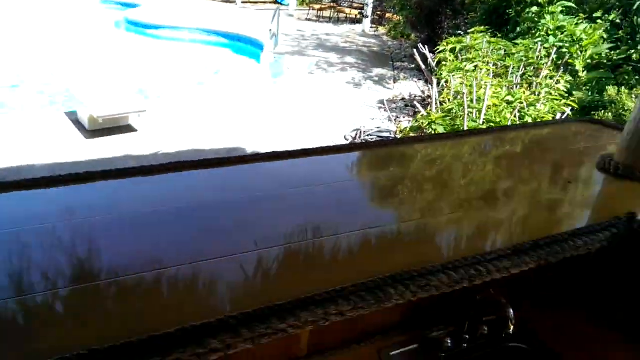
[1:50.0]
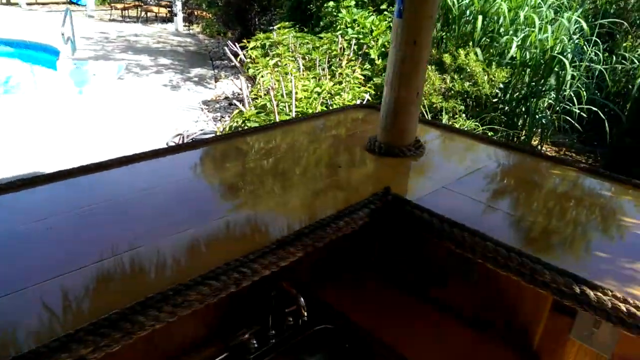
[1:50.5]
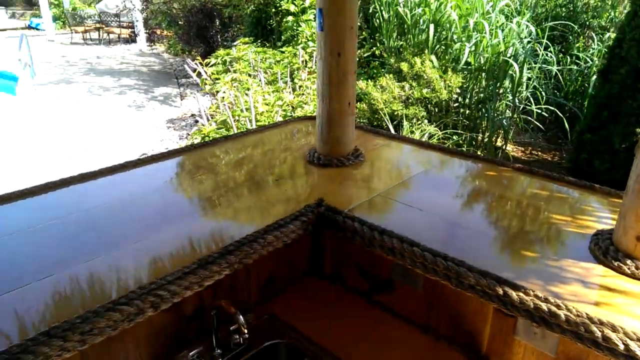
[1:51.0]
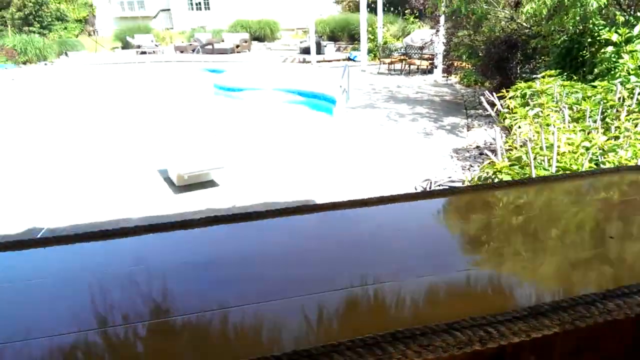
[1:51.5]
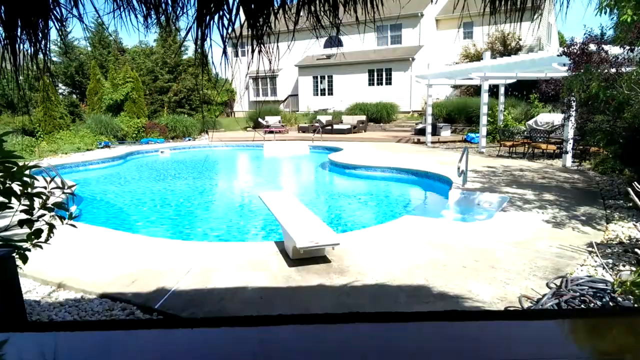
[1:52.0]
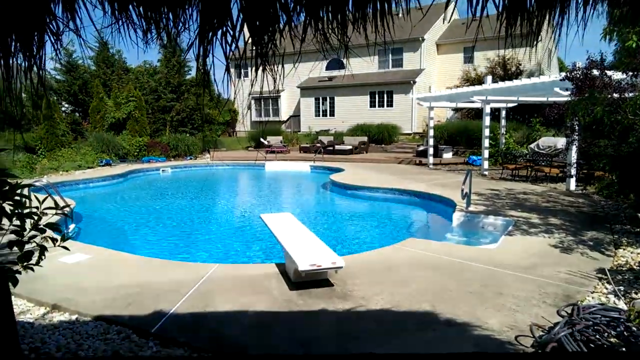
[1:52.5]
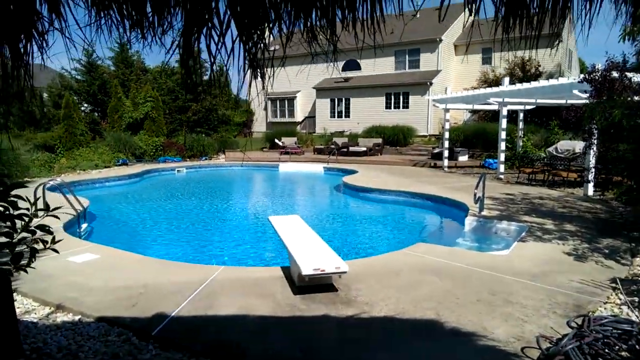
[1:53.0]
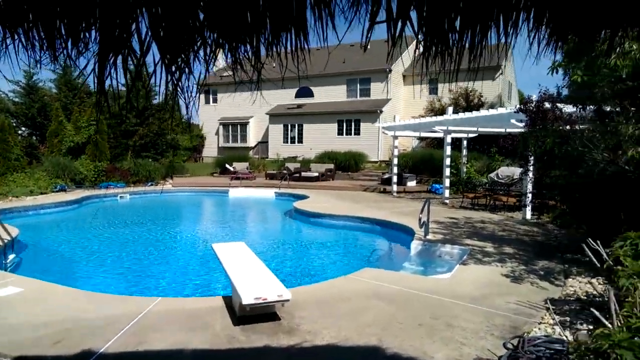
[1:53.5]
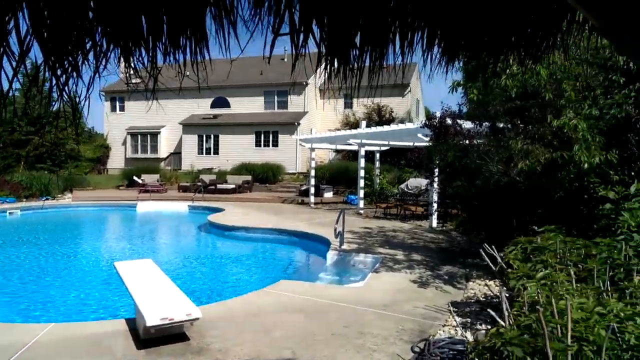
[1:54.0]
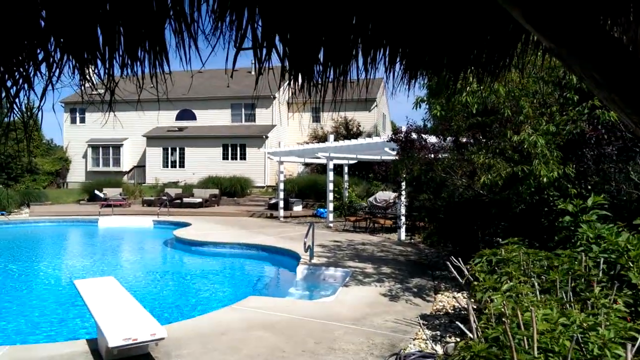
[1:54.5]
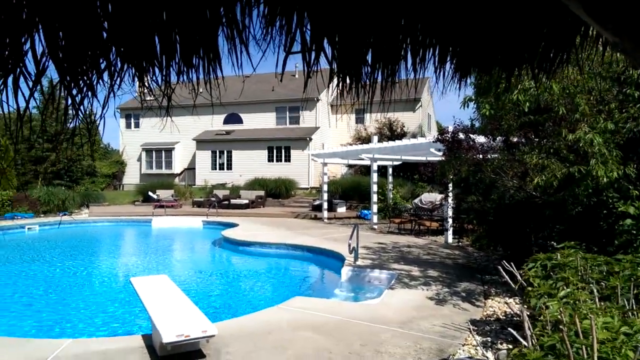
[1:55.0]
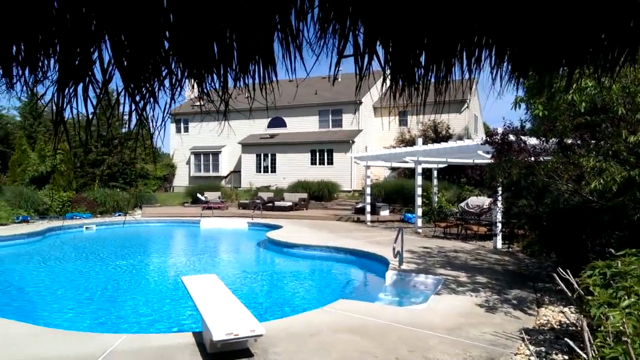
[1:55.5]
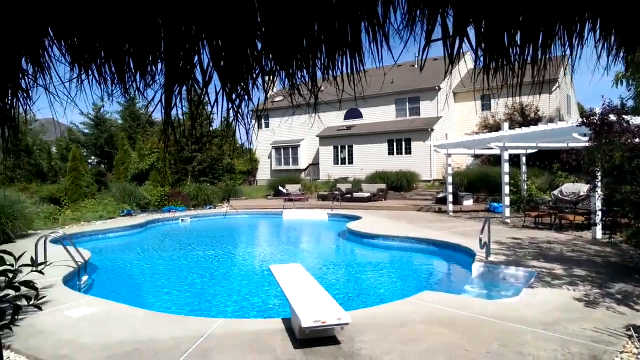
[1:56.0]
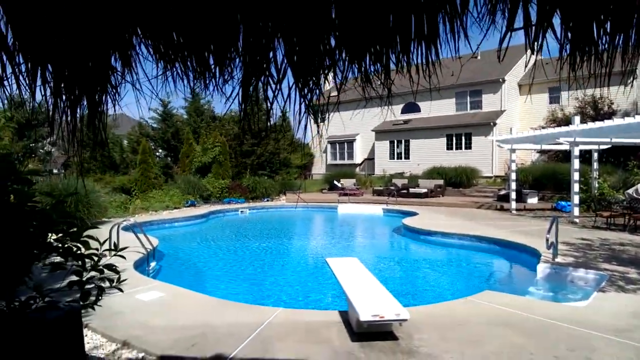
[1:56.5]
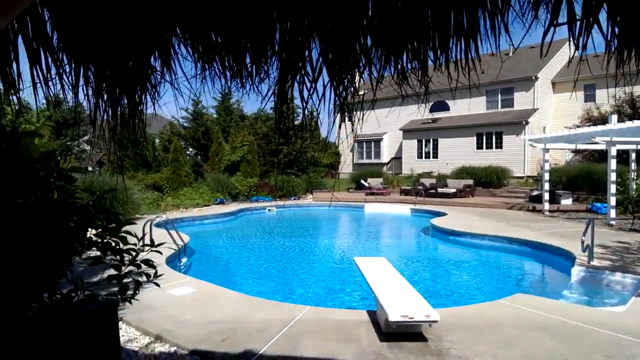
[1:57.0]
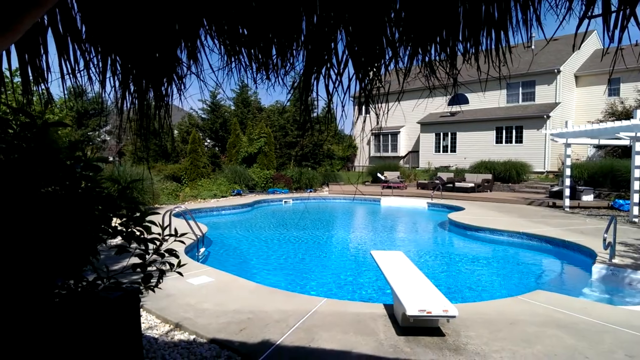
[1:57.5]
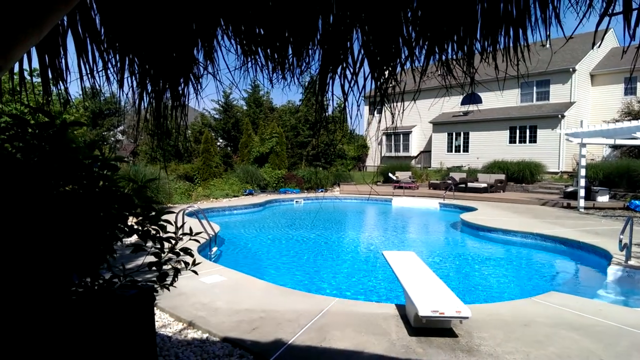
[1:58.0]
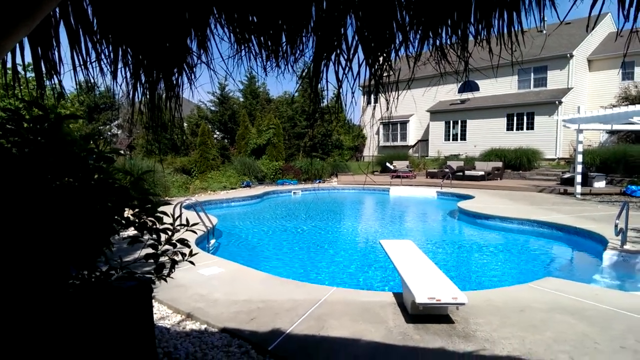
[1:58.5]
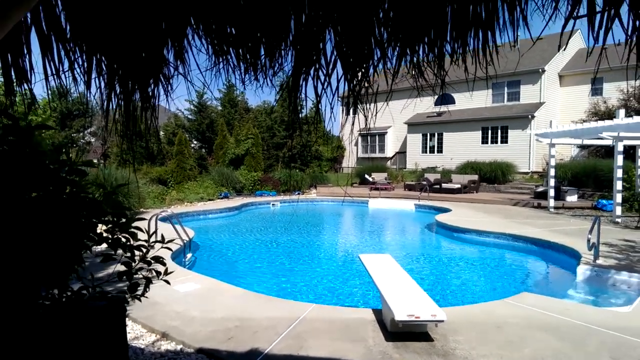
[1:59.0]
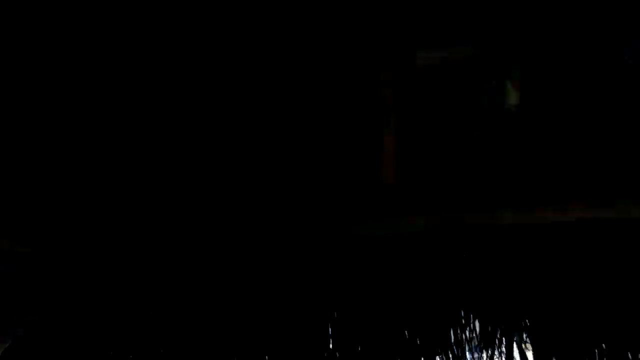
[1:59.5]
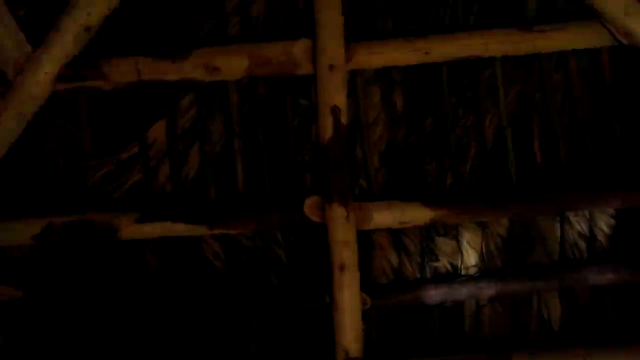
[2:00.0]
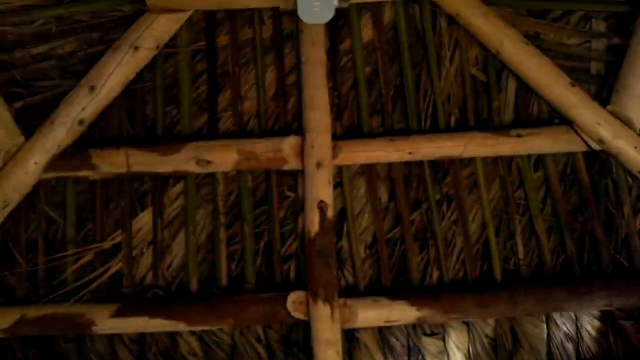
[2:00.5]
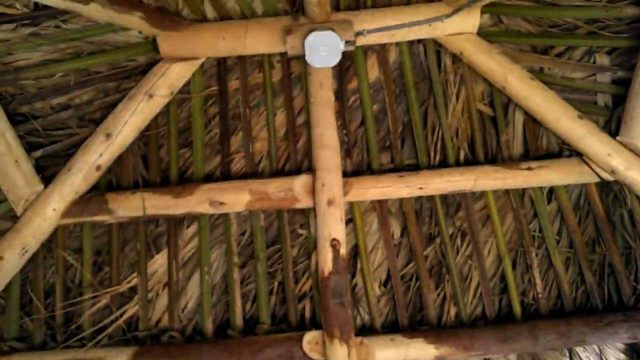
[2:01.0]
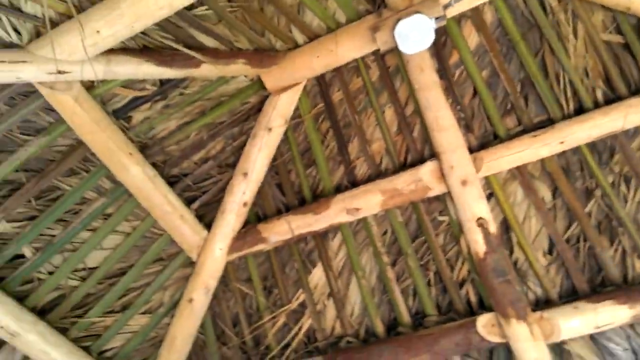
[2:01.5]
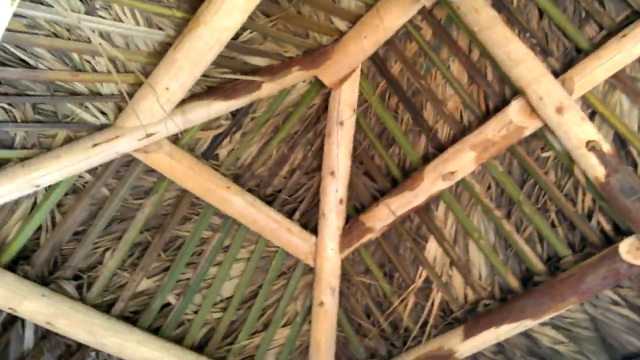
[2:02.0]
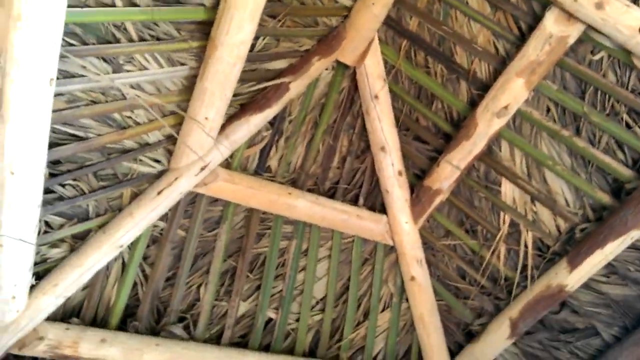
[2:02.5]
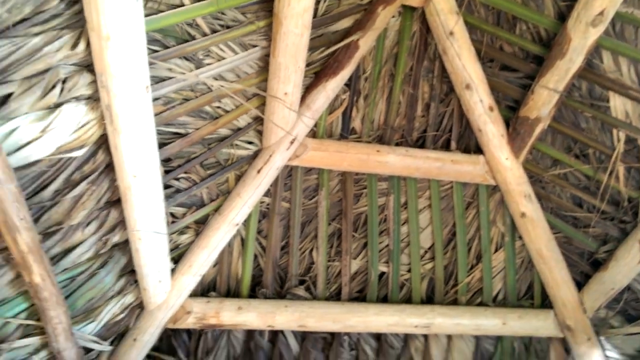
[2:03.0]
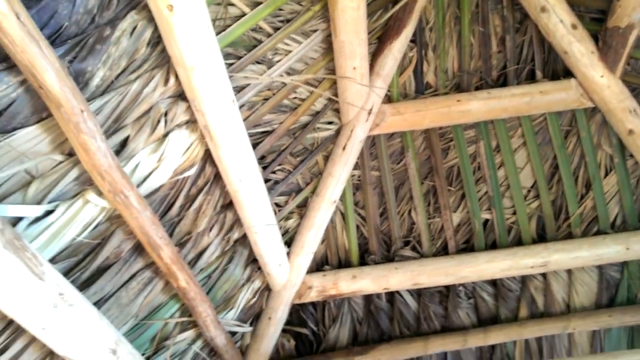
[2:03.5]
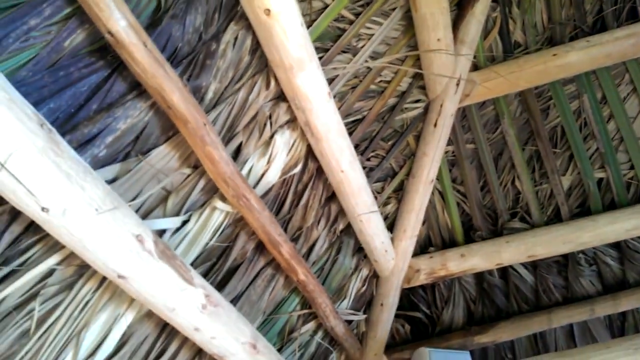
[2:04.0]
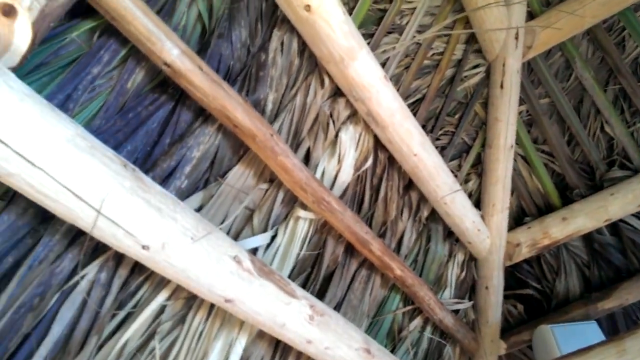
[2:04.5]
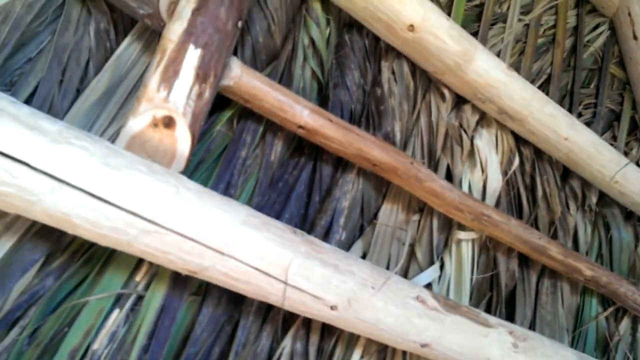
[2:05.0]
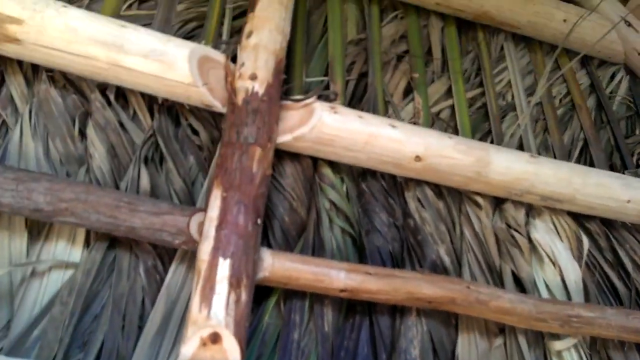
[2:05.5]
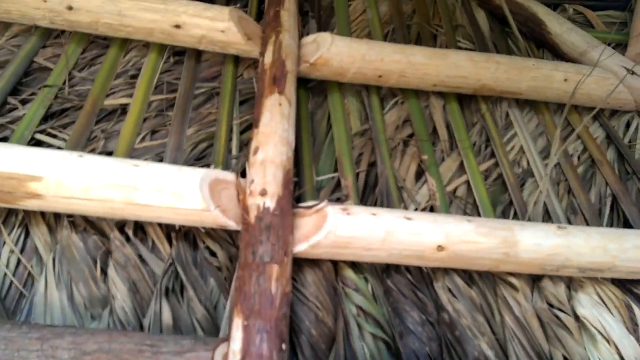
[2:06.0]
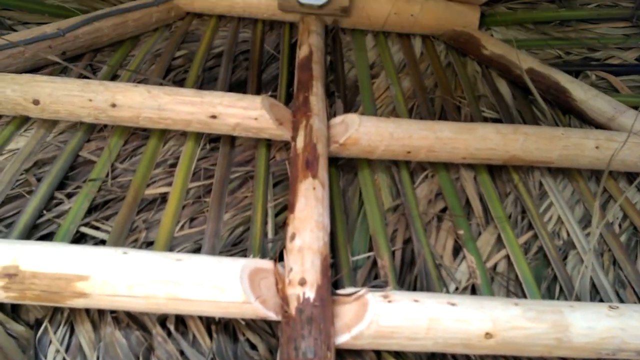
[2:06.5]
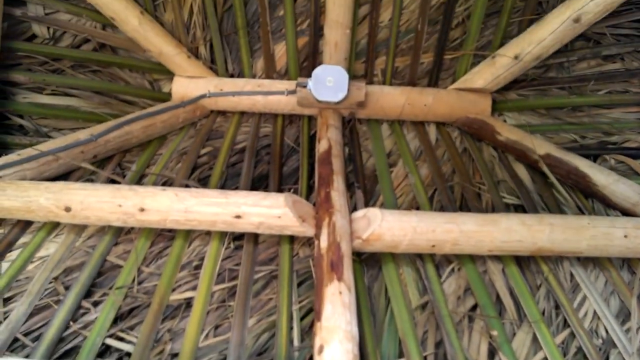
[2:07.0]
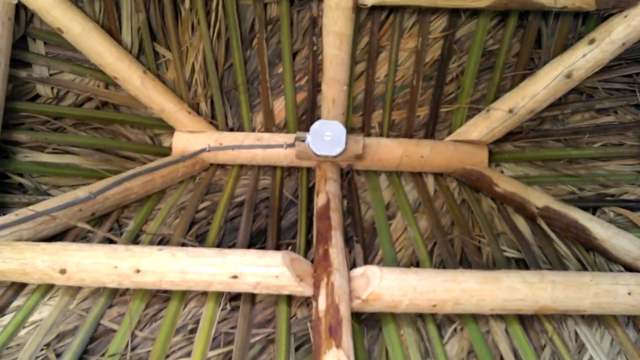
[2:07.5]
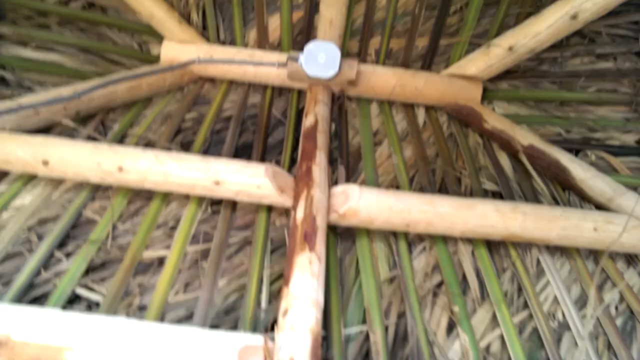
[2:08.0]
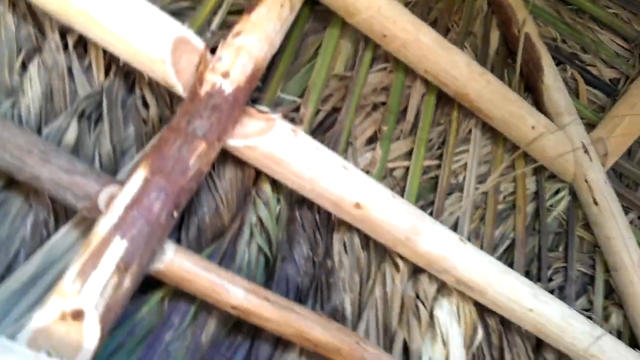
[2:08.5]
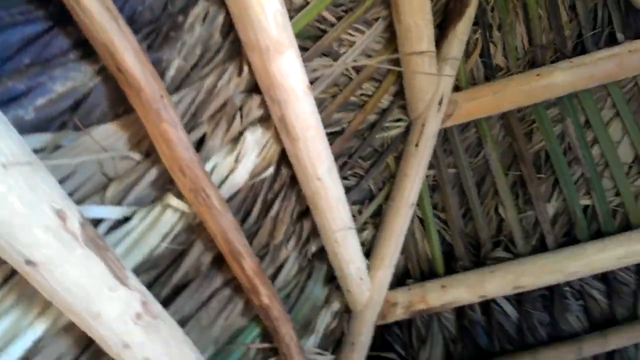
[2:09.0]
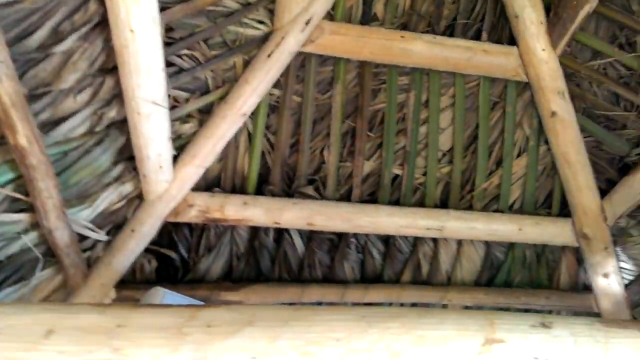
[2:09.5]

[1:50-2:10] A shiny countertop is shown, viewed at its corner, which has a pole in it. The camera pans slightly to the left to show the backyard of a house with white walls and about six windows. Alongside the house is poolside furniture in the distance. To the right is a metal structure that looks like a shade over more outdoor furniture. The pool lies between the house and the camera; it has a curved, irregular shape and a white diving board. To the left of the house in the background are tall, thick green trees or vegetation. The camera pans slightly to the right and then to the left, giving a full view of the backyard, before panning up to show the inside of the roof of the structure the camera is in.